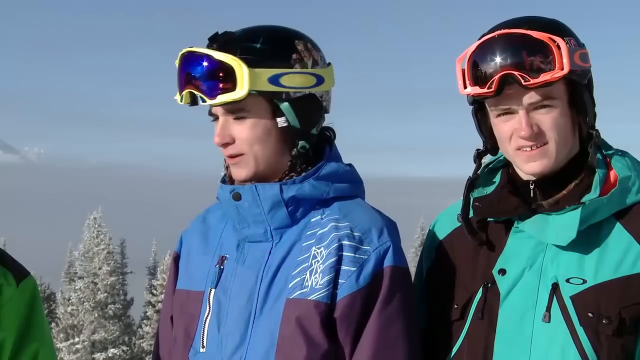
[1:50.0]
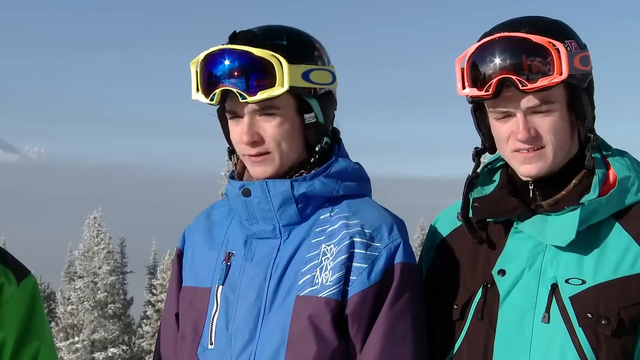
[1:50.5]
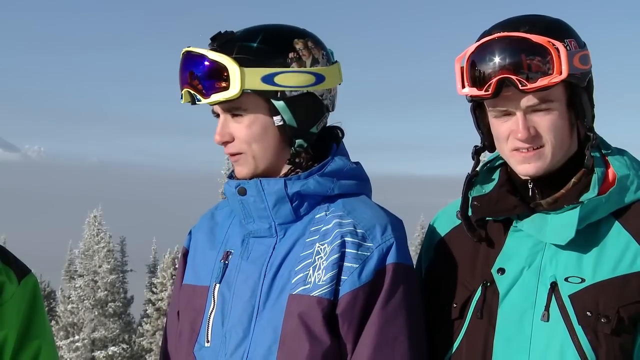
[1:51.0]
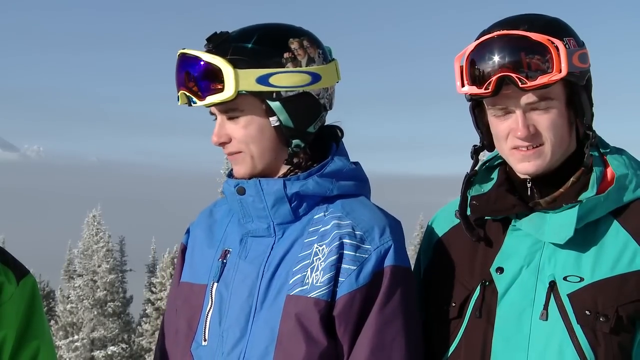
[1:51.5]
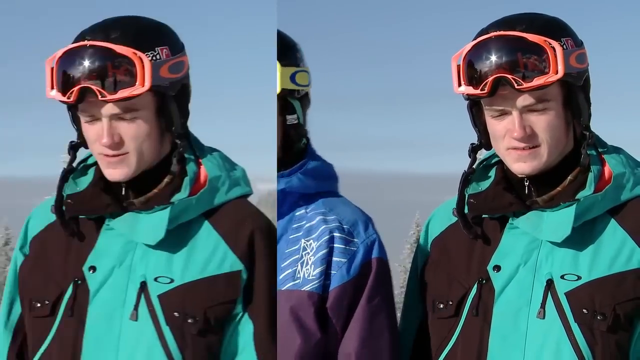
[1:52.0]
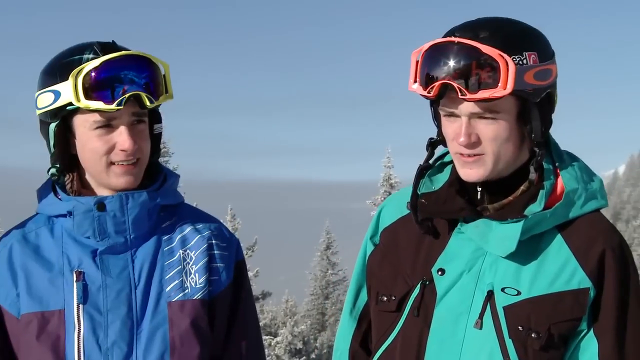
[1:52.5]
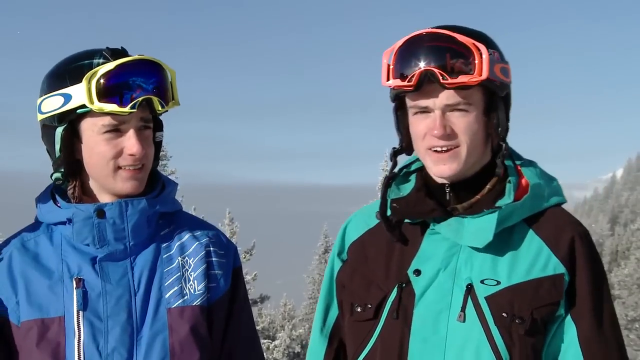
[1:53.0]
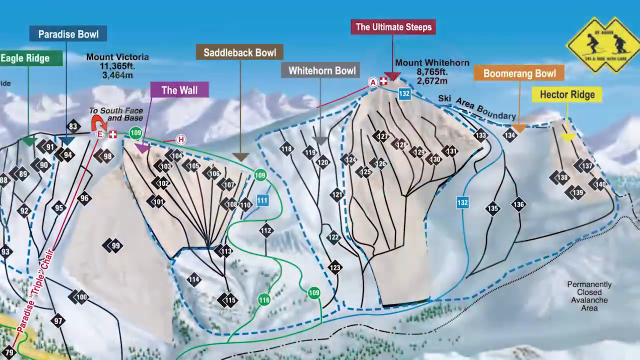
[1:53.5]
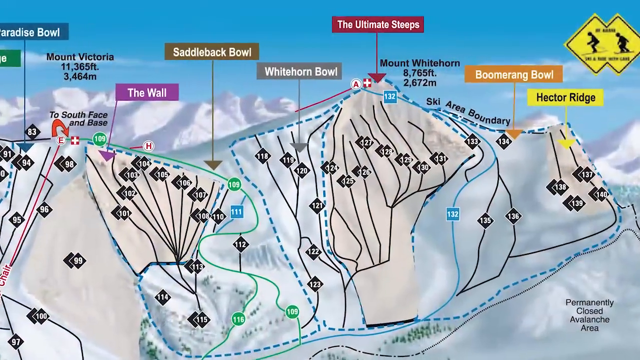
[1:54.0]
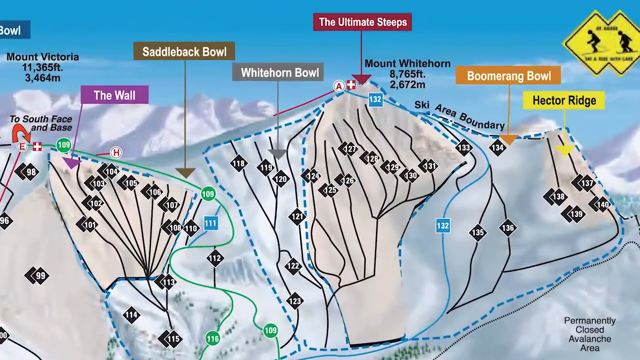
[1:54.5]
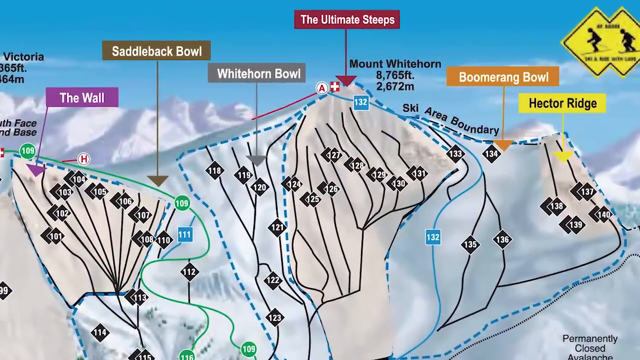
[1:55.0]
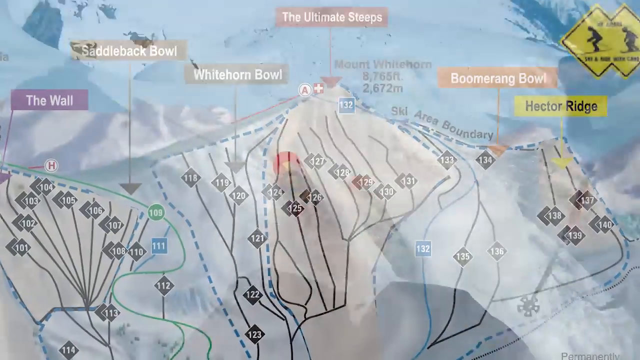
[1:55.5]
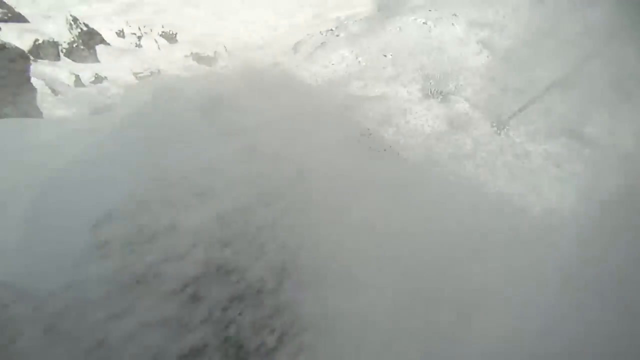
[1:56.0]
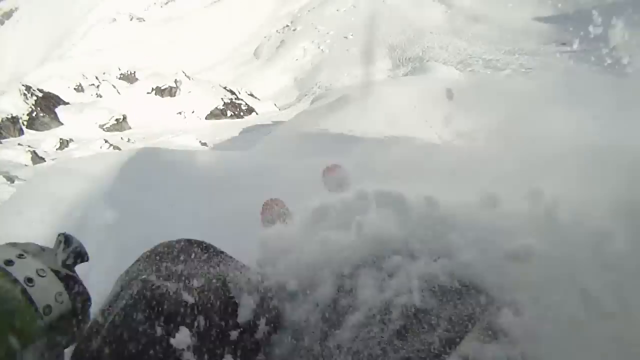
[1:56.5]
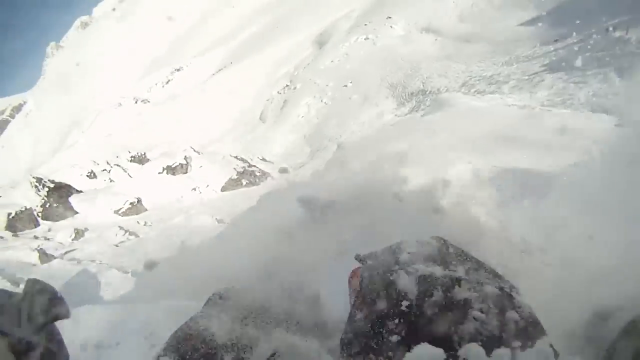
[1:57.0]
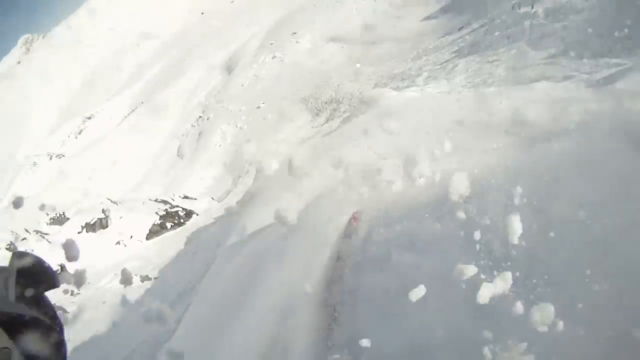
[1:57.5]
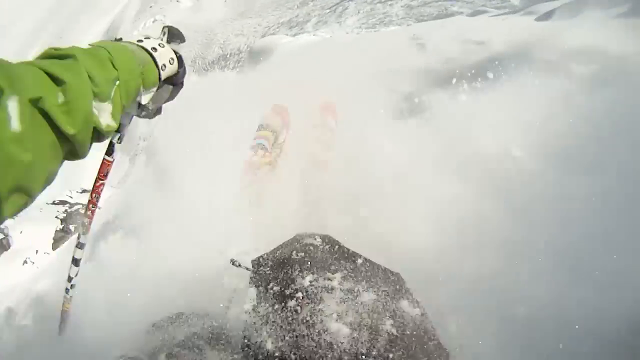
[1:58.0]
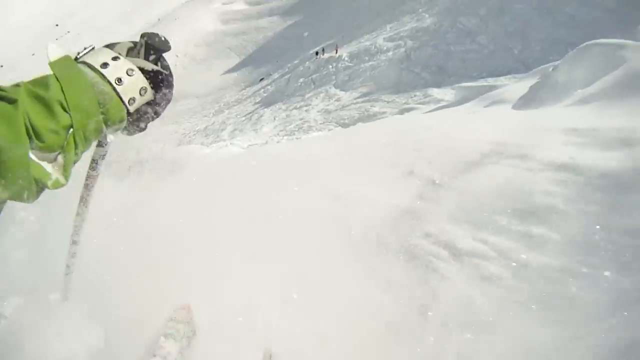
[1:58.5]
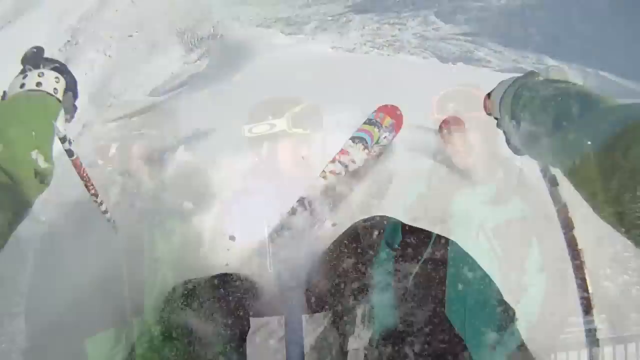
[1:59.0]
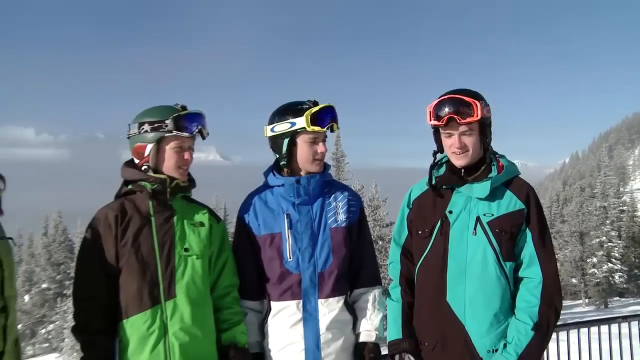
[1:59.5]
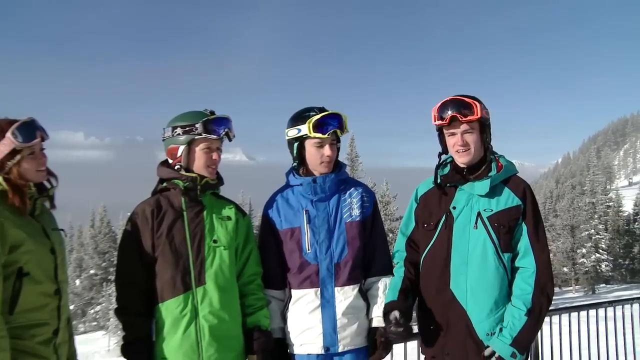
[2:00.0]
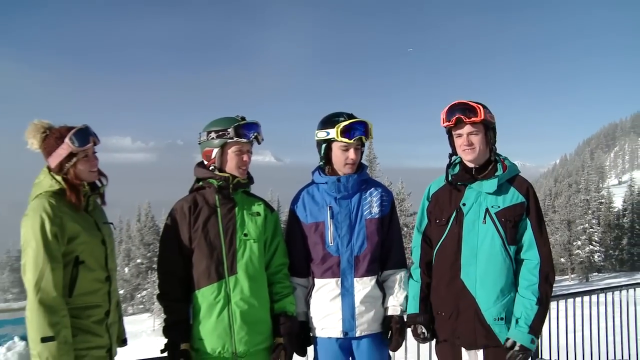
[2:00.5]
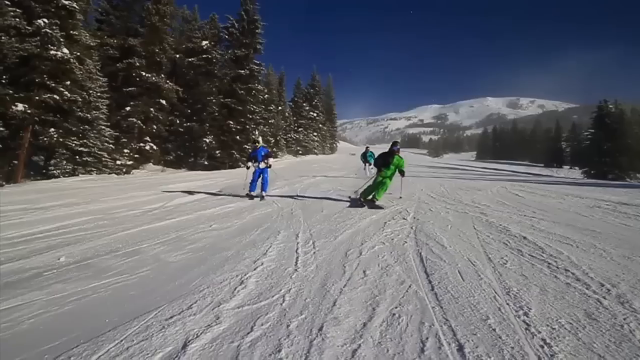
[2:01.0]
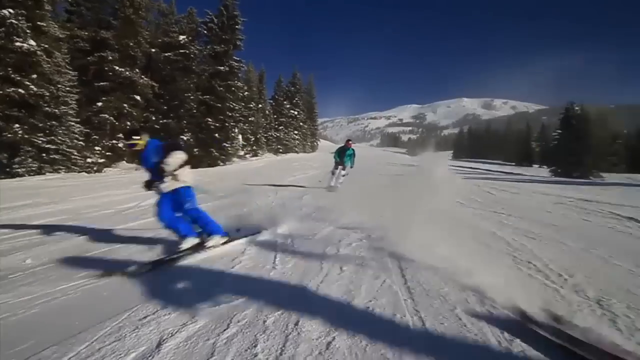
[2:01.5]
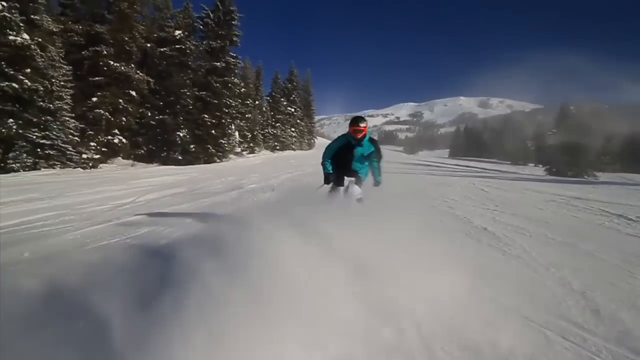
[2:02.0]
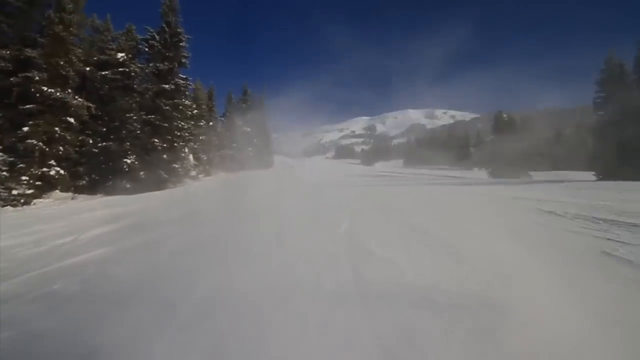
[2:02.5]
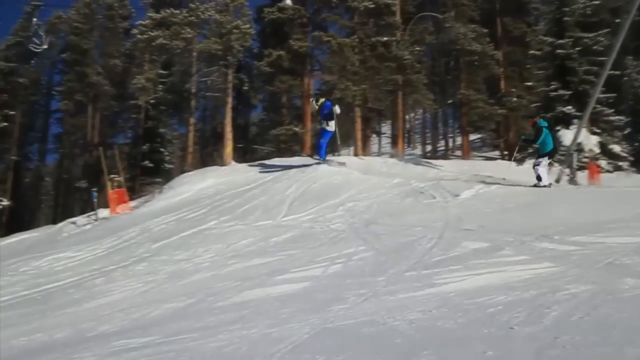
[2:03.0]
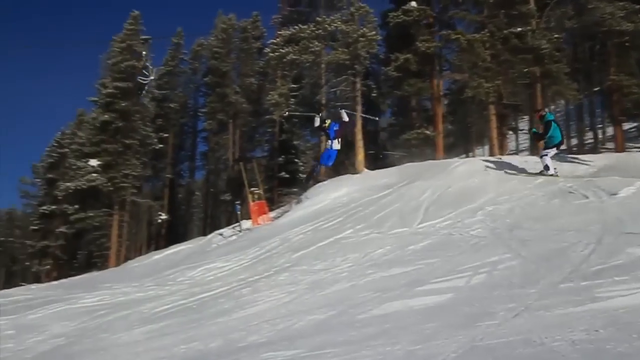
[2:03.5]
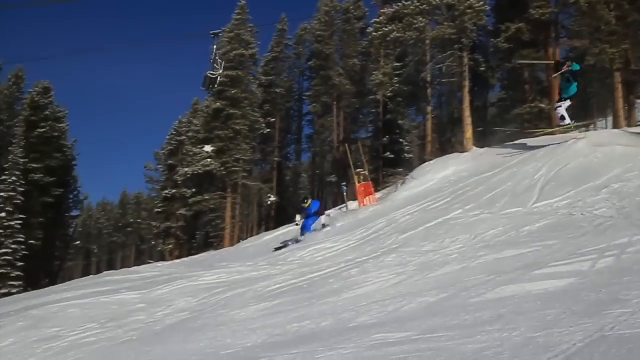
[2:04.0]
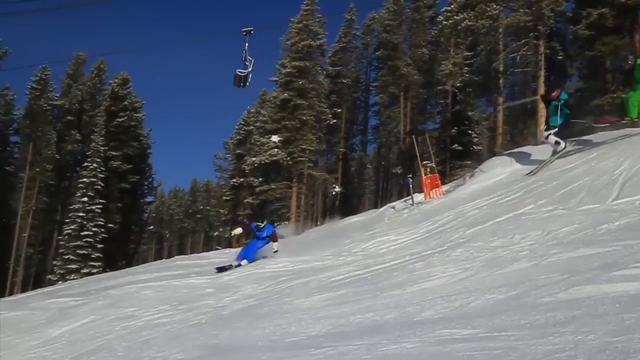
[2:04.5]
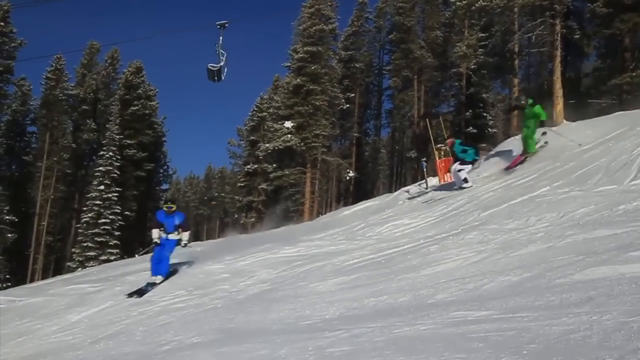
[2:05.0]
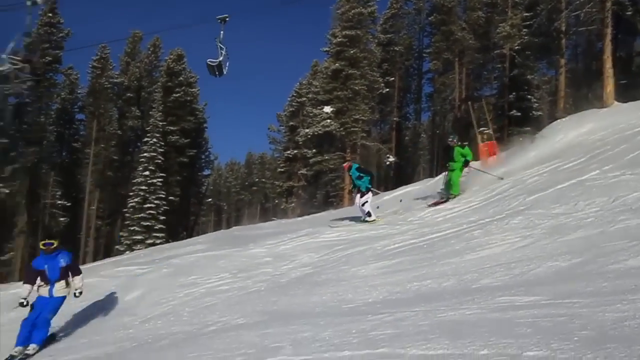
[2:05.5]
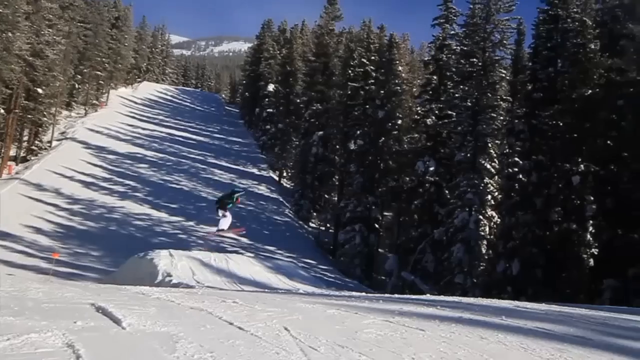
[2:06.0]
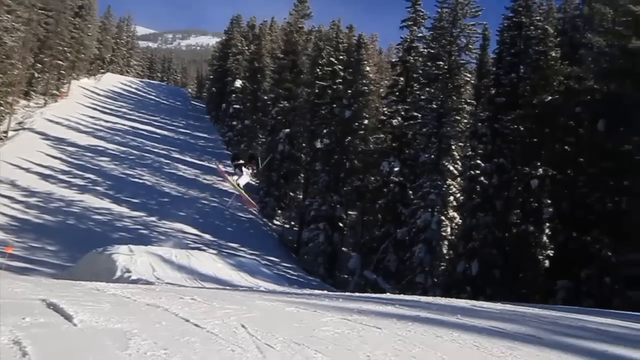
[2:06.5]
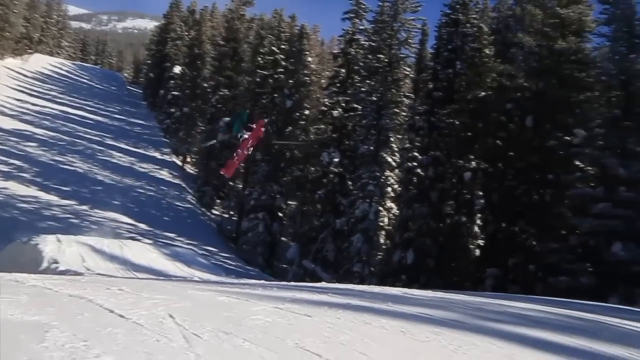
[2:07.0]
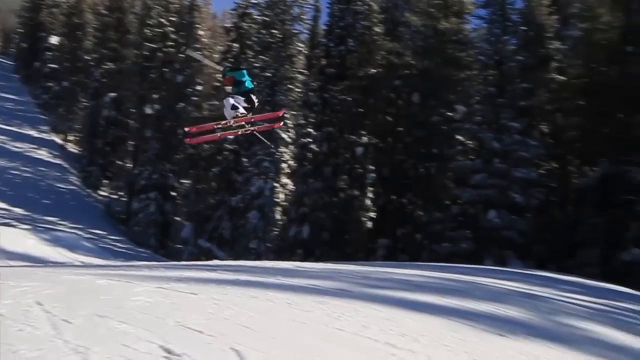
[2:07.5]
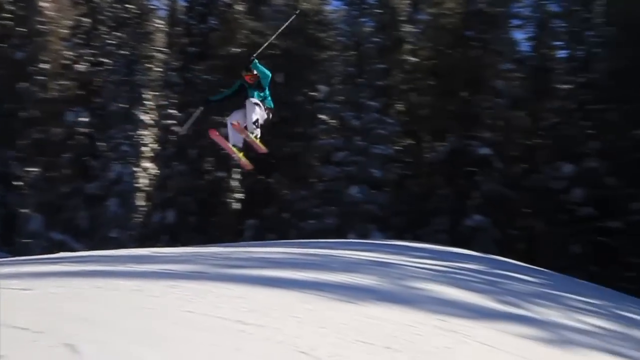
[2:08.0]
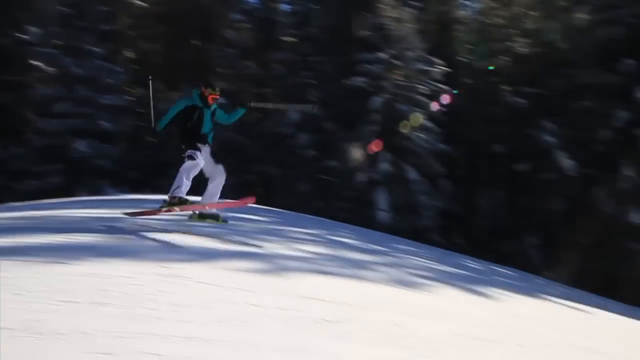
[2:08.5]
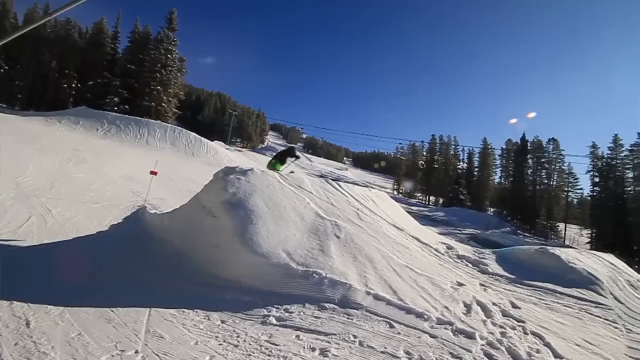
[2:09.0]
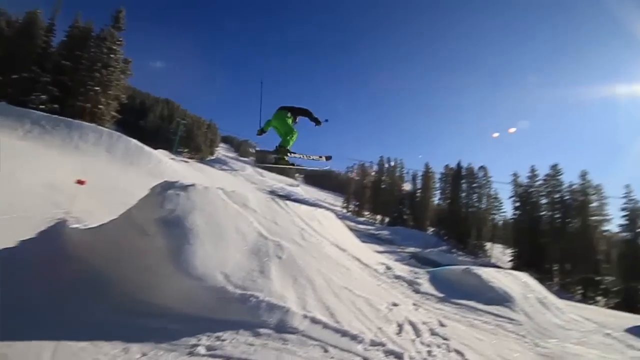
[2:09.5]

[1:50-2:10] In the center-right of the frame are the kid in blue and another kid whose jacket, with the sun reflecting off it, looks baby blue-green or even lime green. They look on while the kid in blue talks, and the video cuts to the other kid. It then cuts to the map of the ski runs and to a POV-like shot of going downhill. It cuts back to the kids, then shows one of them doing tricks off little ramps built on the ski runs.